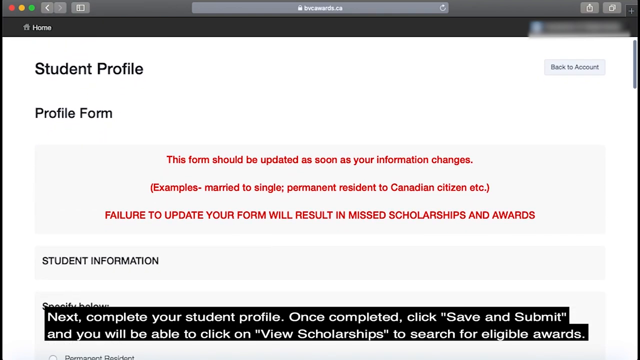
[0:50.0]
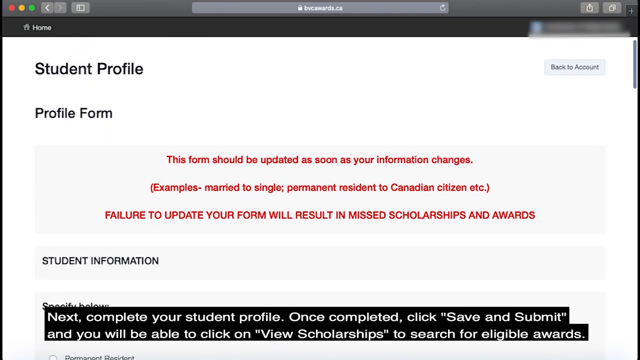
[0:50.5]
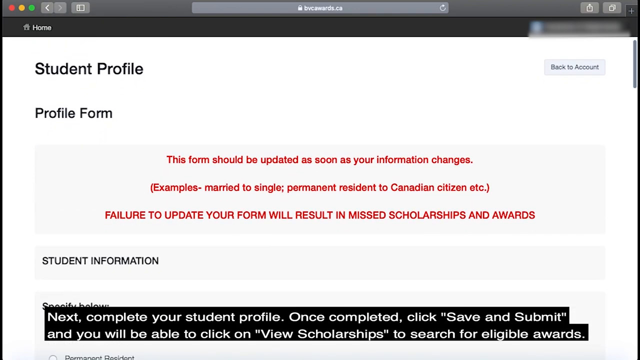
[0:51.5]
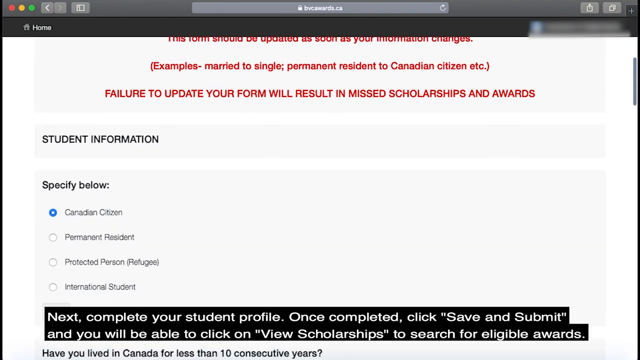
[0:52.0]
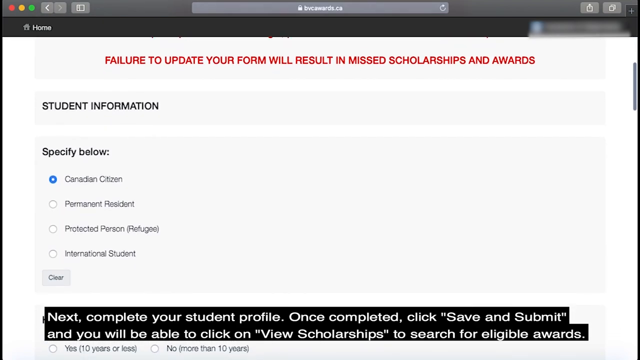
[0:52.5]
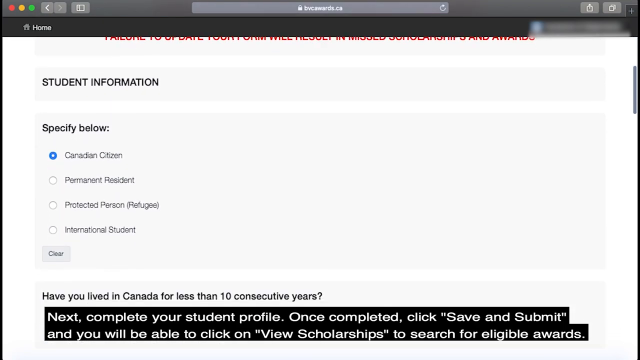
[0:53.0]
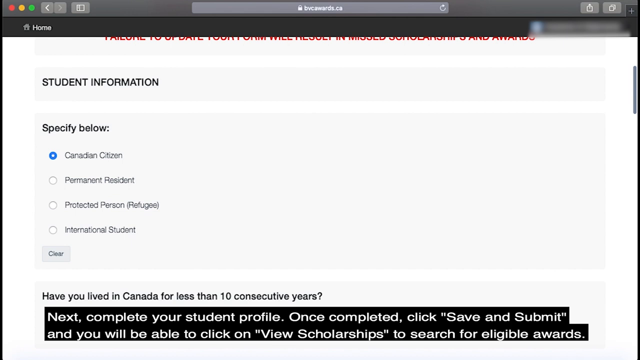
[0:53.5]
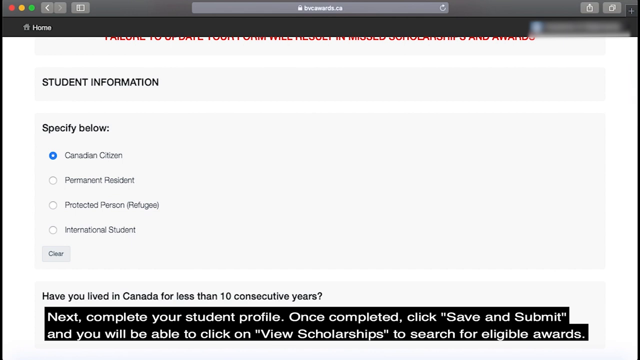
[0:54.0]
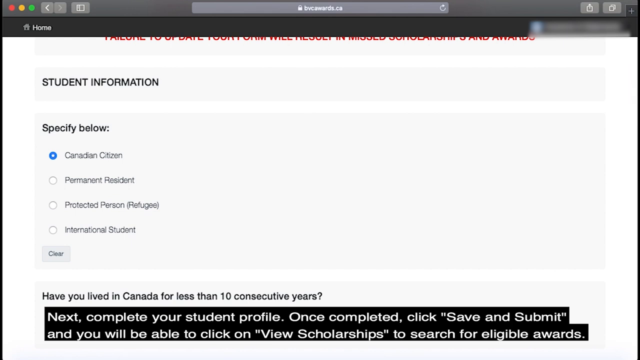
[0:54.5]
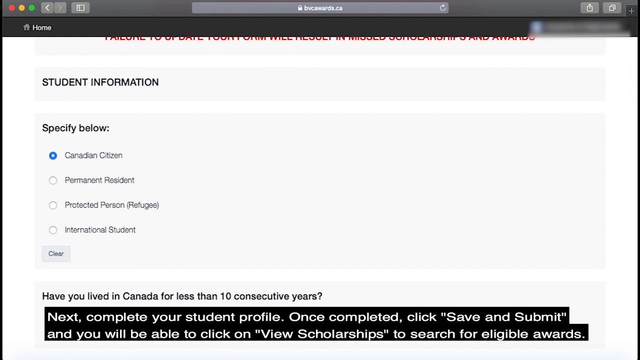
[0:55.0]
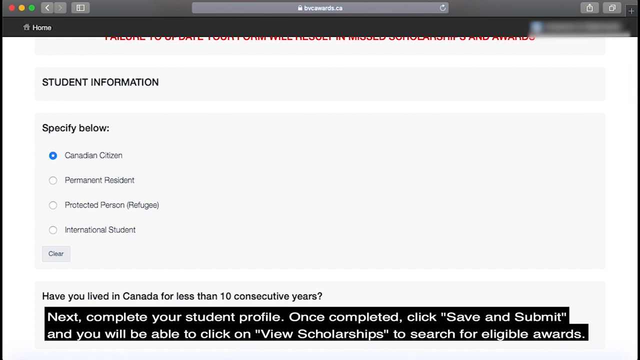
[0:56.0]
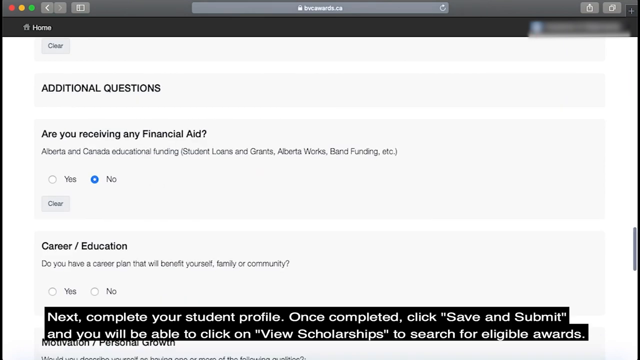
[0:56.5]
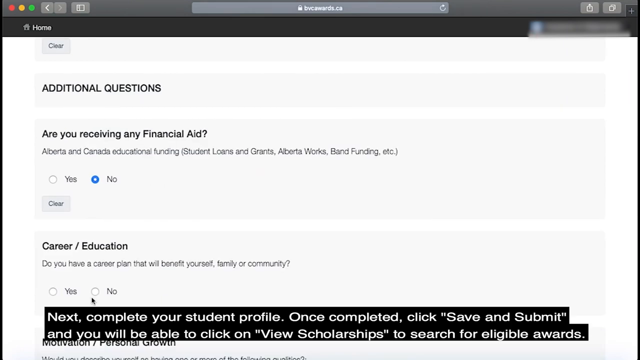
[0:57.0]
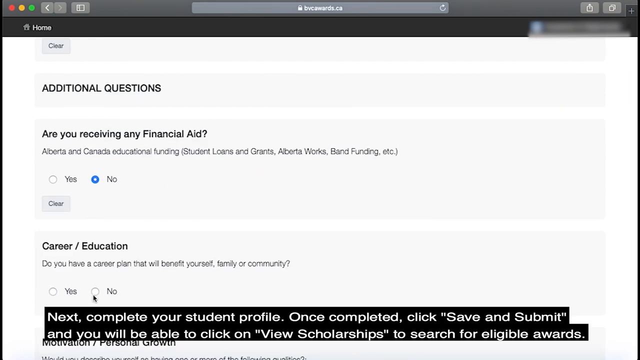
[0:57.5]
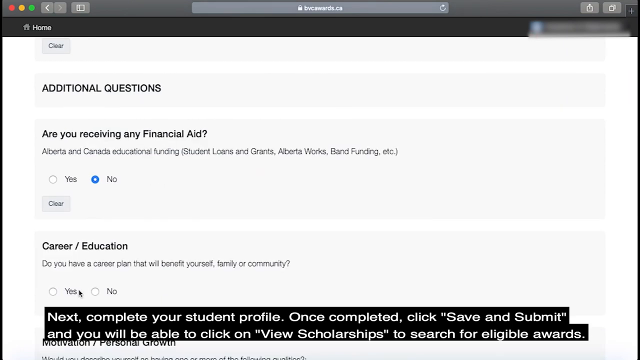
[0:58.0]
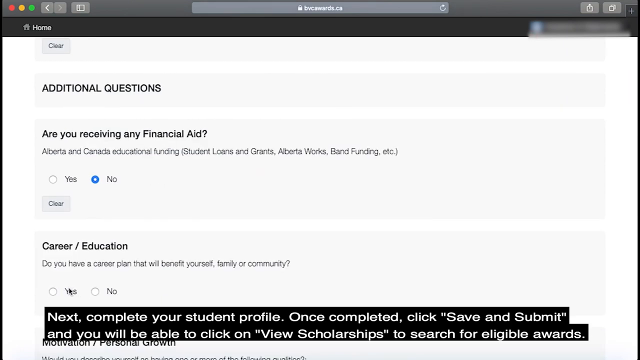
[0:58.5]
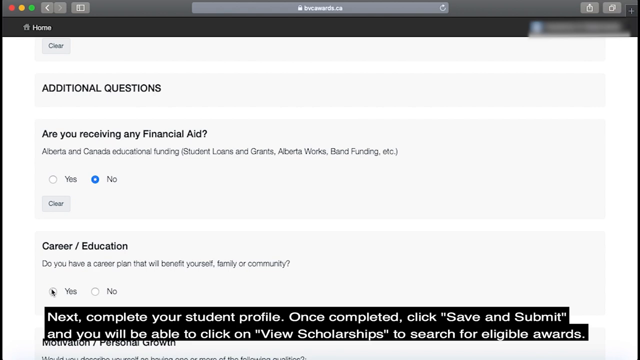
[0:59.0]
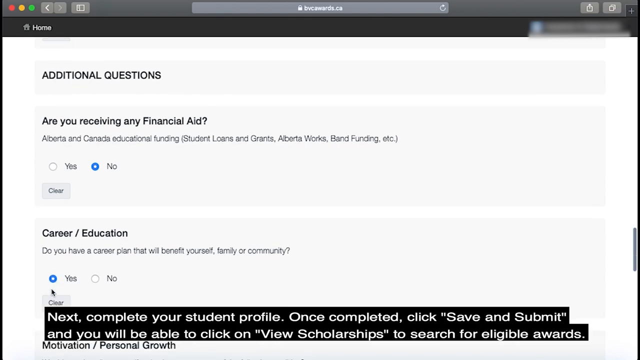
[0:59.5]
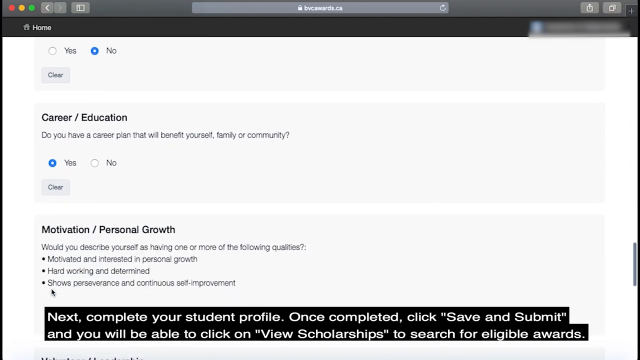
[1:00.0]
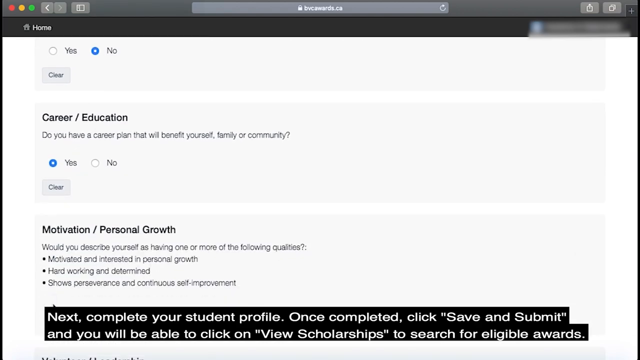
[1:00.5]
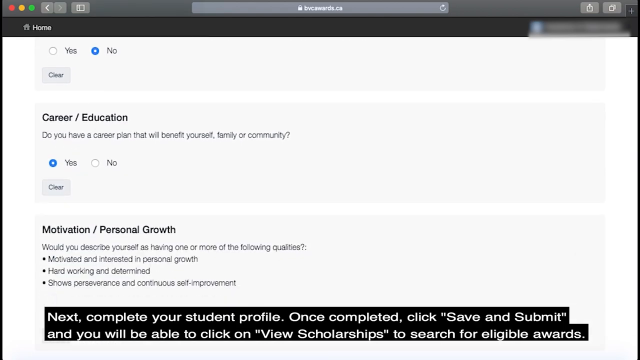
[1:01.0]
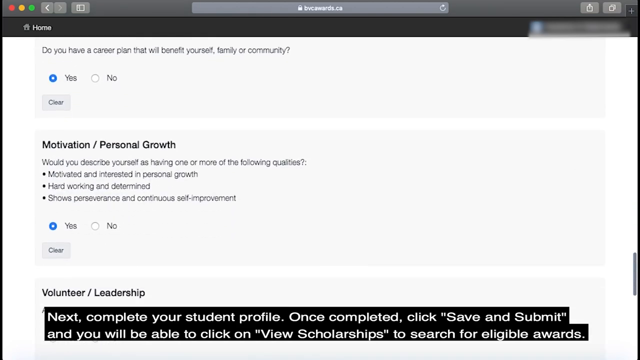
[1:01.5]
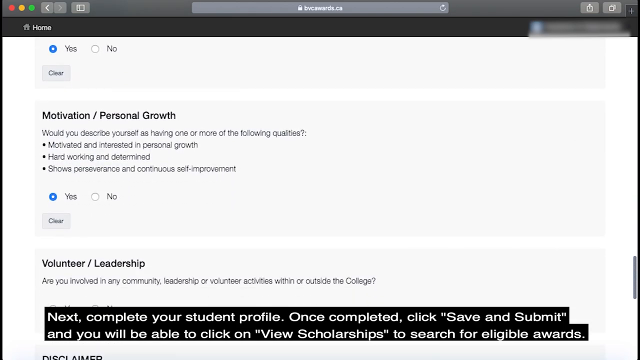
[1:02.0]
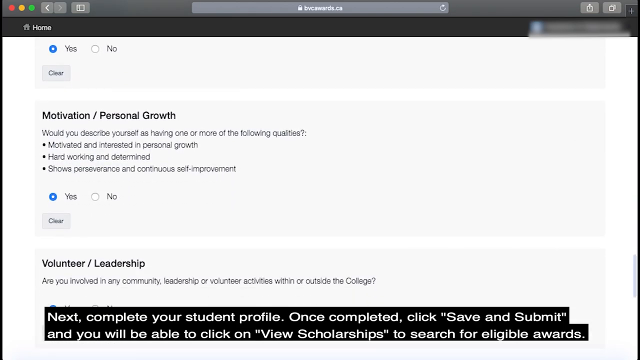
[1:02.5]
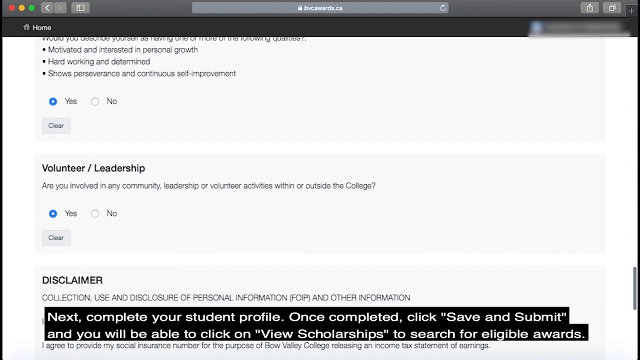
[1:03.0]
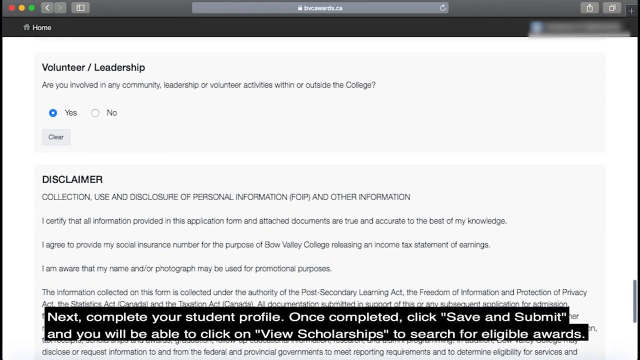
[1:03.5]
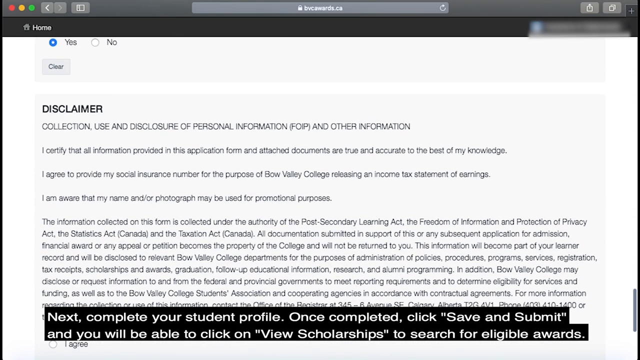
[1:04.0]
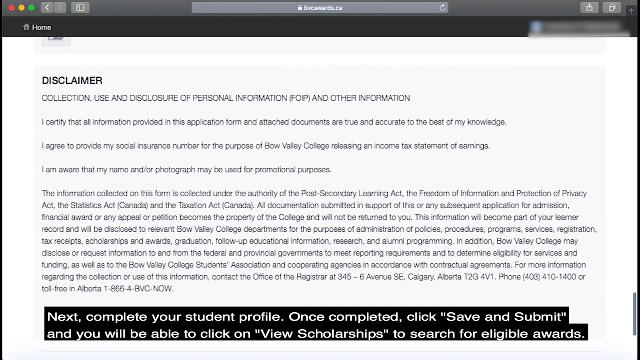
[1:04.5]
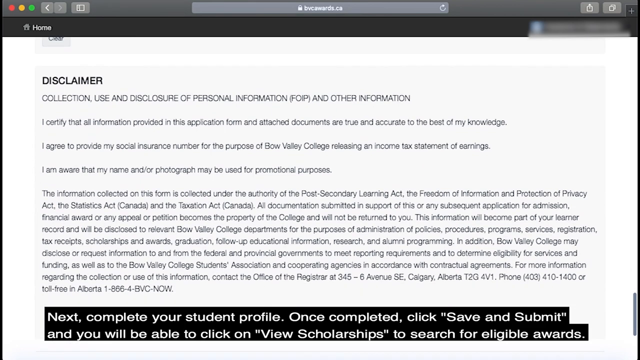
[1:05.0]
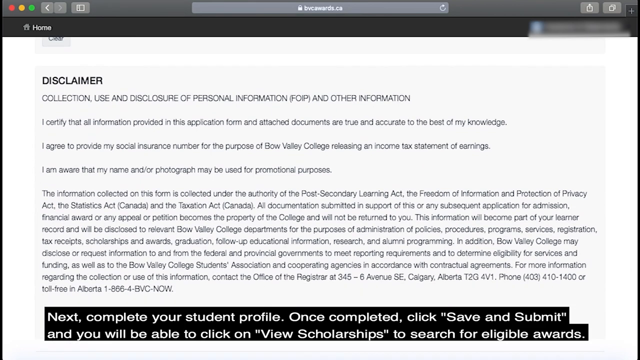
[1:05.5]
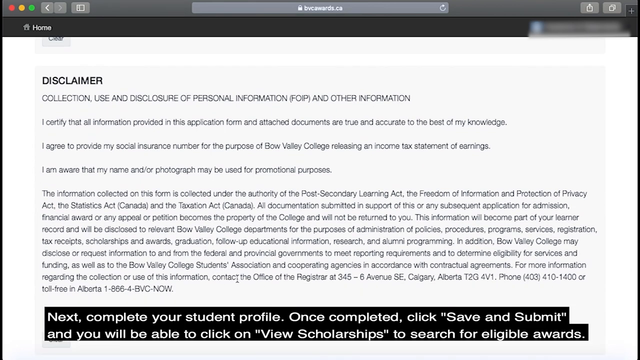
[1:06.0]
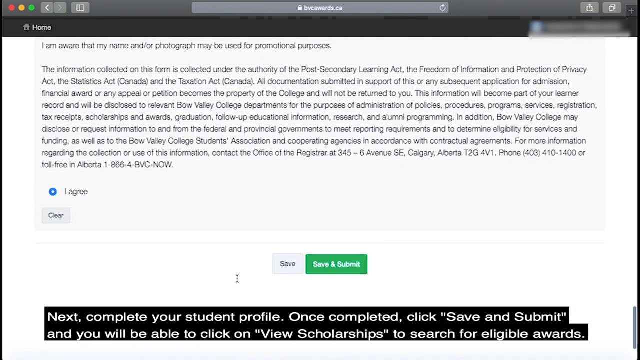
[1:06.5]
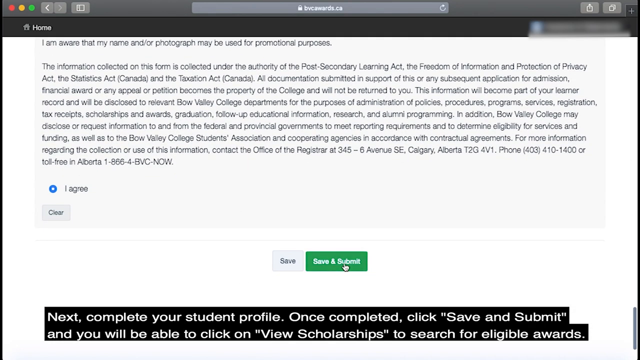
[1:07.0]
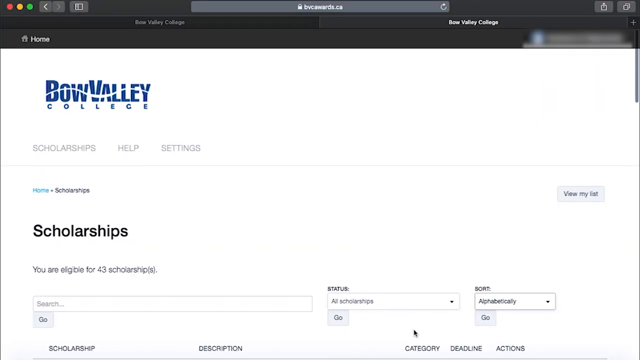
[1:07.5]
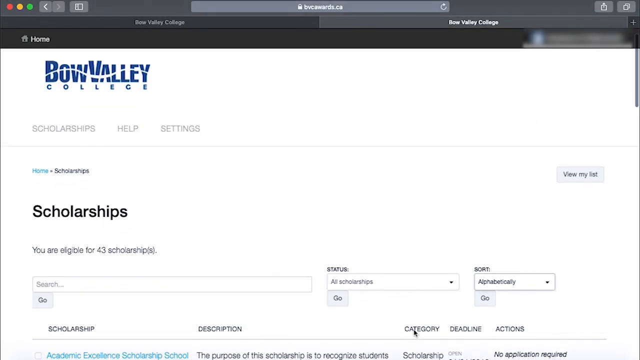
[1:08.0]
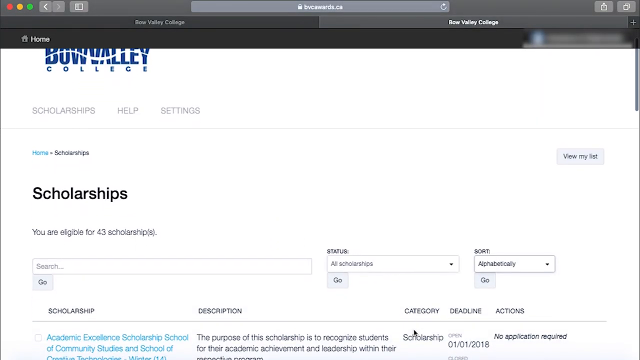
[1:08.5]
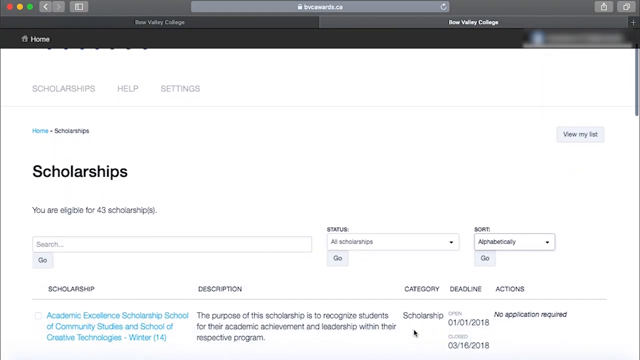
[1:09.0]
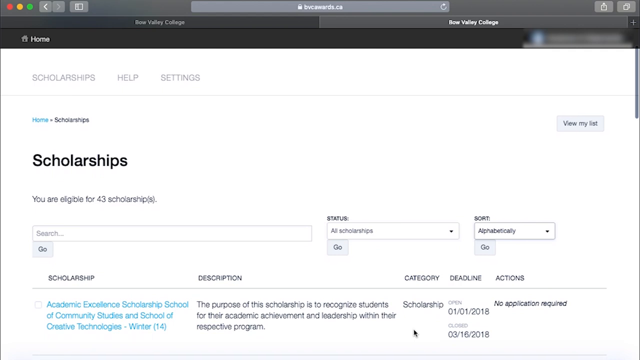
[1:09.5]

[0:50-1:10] A screen with a white background shows "student profile, profile form" in black writing in the upper left-hand corner. In the very centre of the screen below that, red writing says "this form should be updated as soon as your information changes. Examples married to single, permanent resident to Canadian citizen etc. Failure to update your form will result in missed scholarships and awards". Underneath, on the left-hand side, blue writing says "student information". The page scrolls down to "Specify Below", with a box to tick that says "Canadian Citizen" and a blue circle at the left-hand side of that box. The screen scrolls down further to "Additional Questions" on the left-hand side, and below that it says "Are you receiving any financial aid?" There are two options: a circle with "Yes" to its right, and another circle, highlighted in blue, with "No" to its right, showing that No has been clicked. The cursor moves to the next section, "Career Education", which also has a circle with Yes and a circle with No, and the lady clicks Yes with her mouse.